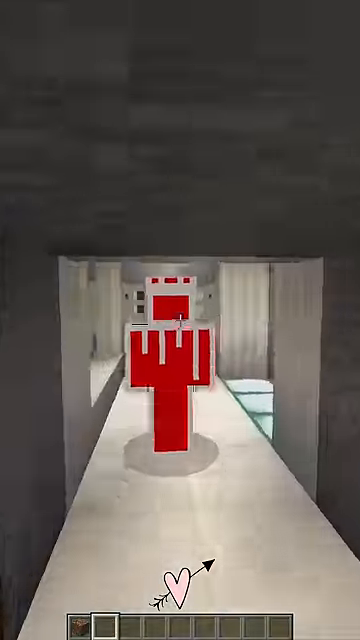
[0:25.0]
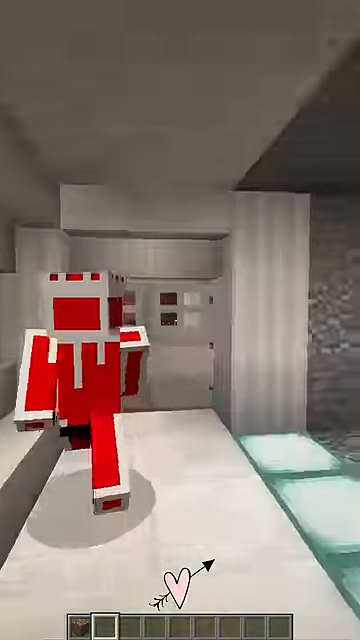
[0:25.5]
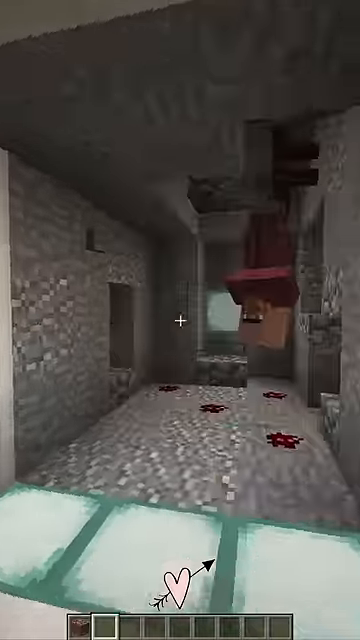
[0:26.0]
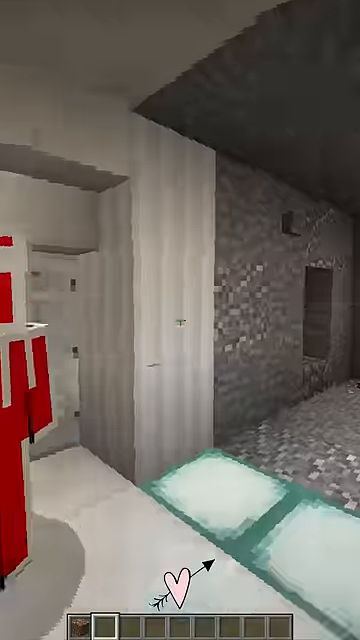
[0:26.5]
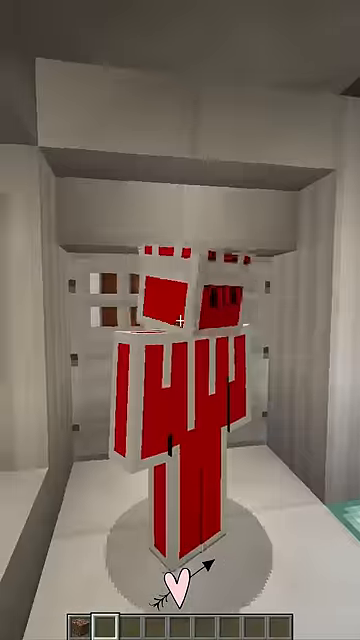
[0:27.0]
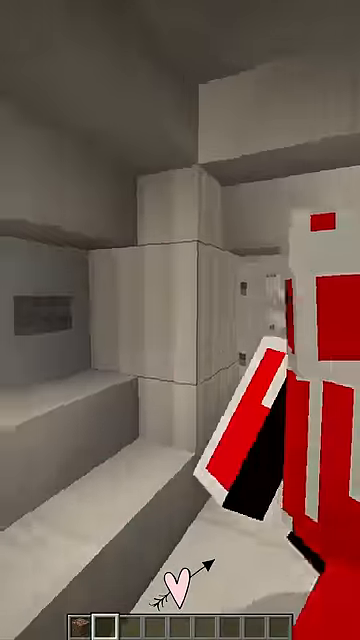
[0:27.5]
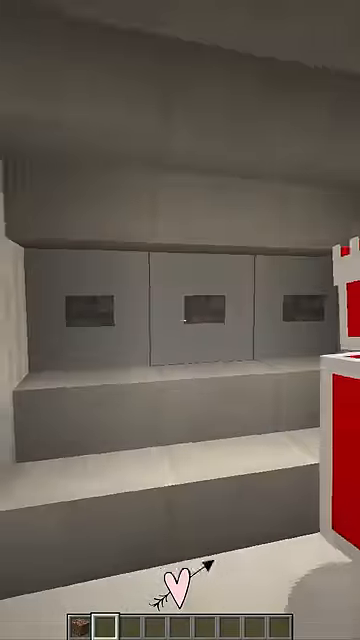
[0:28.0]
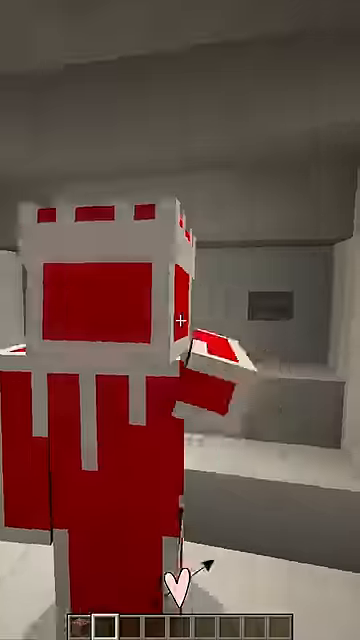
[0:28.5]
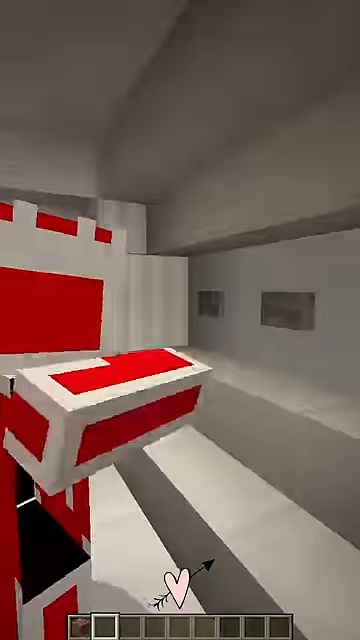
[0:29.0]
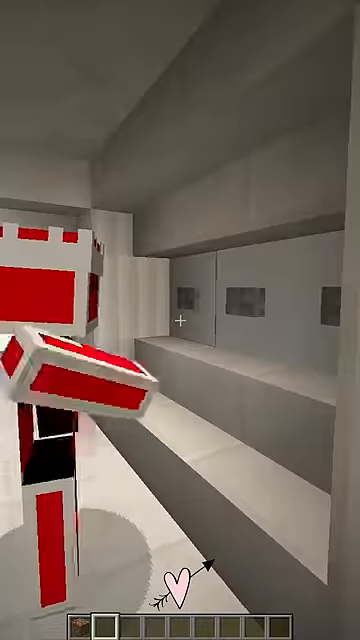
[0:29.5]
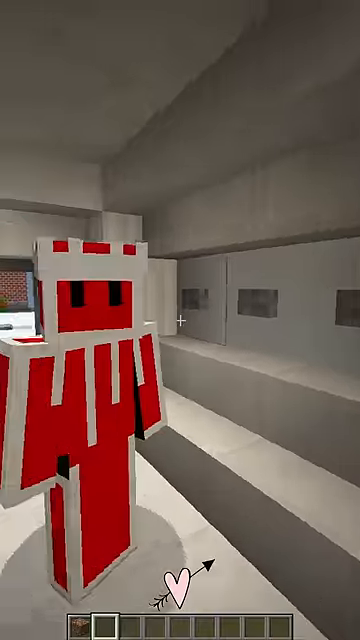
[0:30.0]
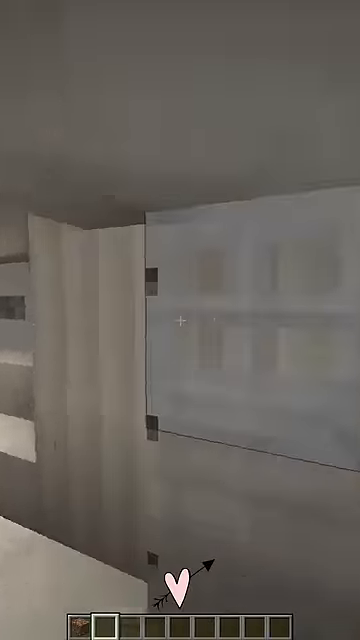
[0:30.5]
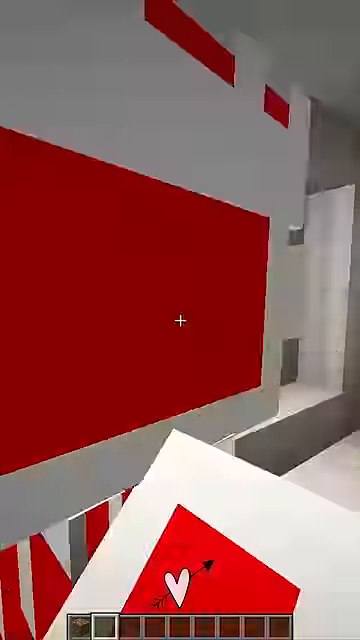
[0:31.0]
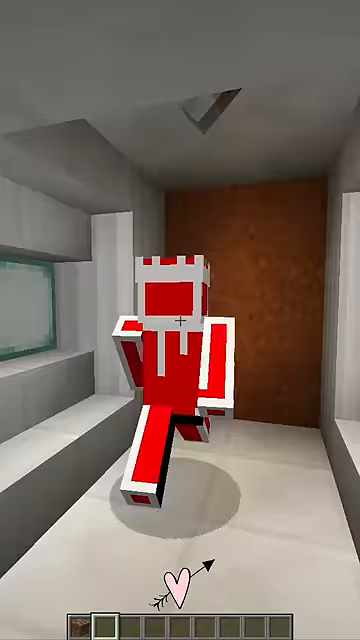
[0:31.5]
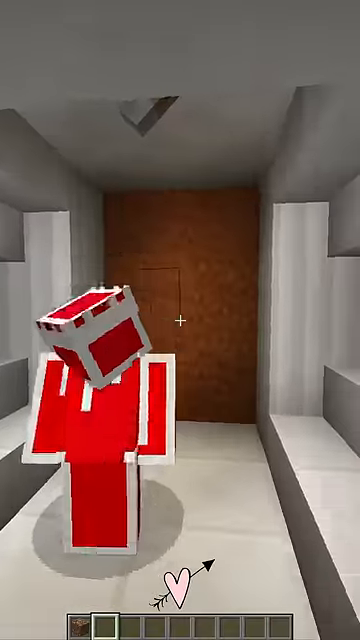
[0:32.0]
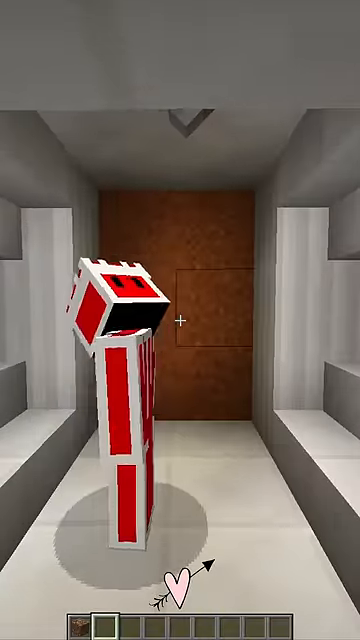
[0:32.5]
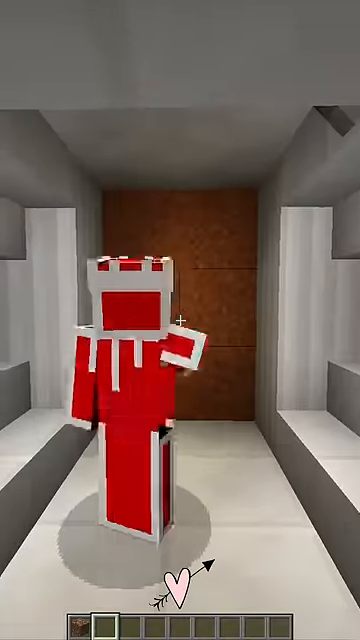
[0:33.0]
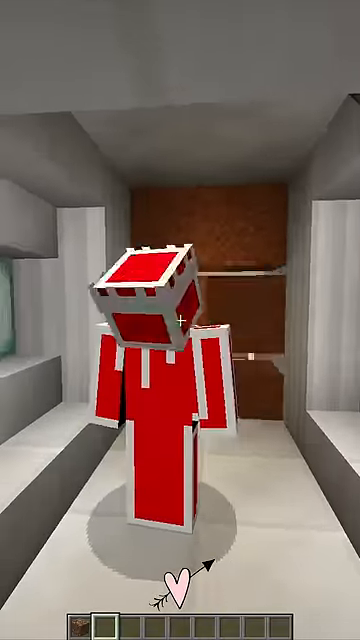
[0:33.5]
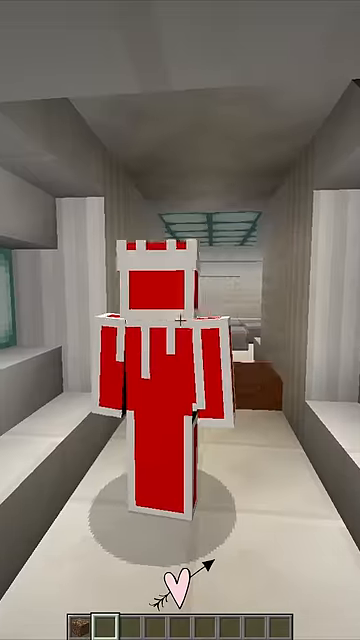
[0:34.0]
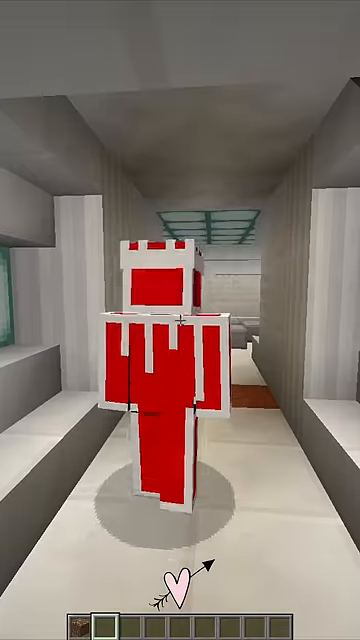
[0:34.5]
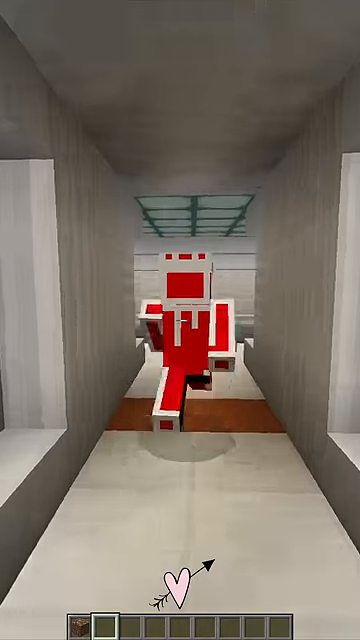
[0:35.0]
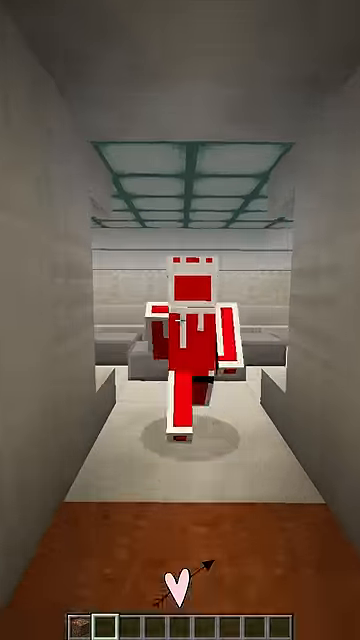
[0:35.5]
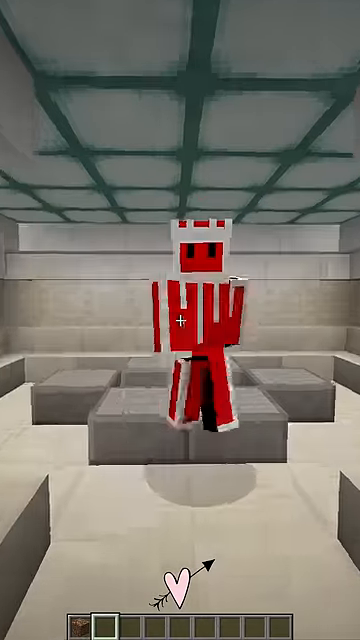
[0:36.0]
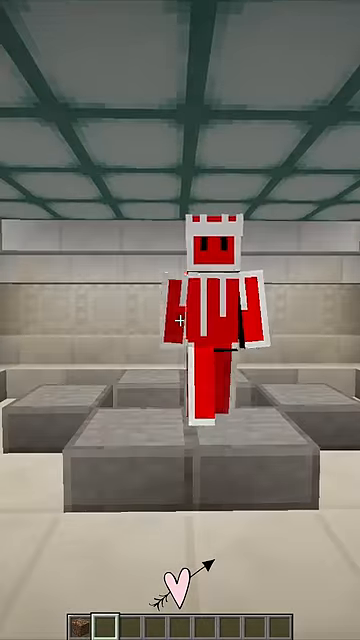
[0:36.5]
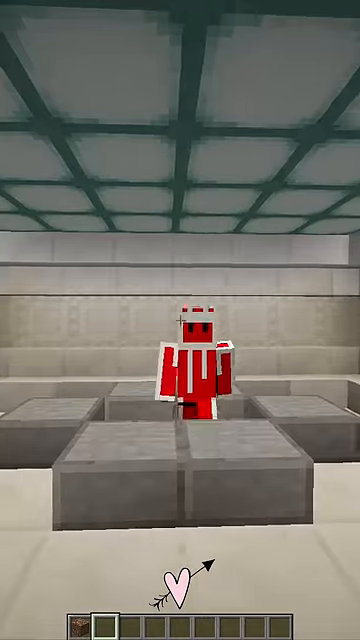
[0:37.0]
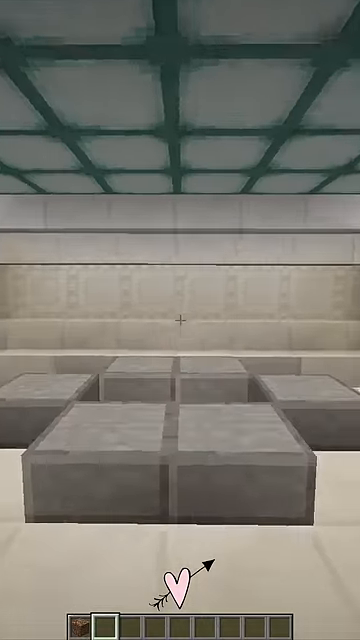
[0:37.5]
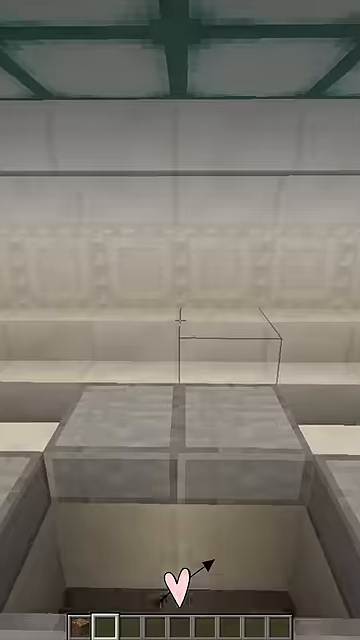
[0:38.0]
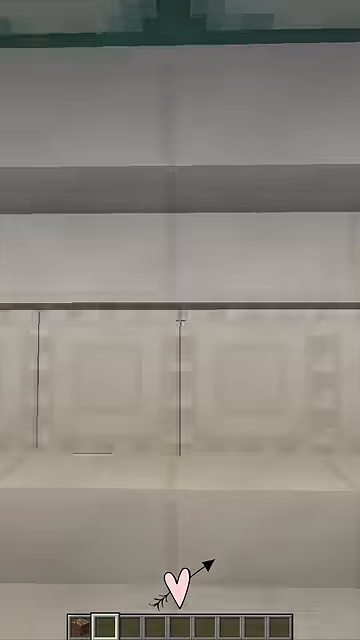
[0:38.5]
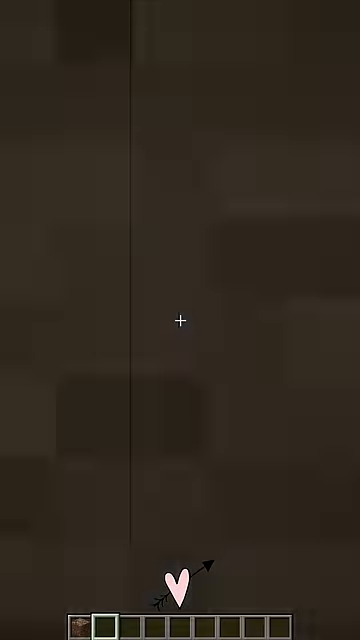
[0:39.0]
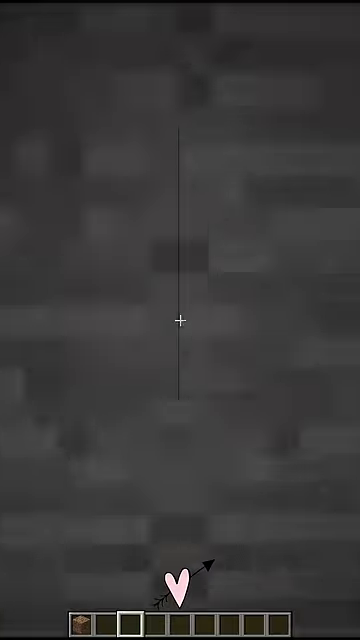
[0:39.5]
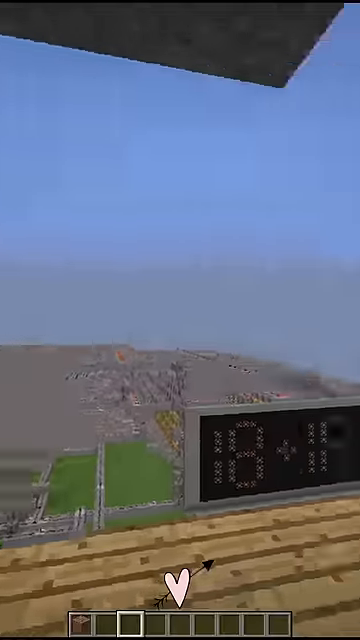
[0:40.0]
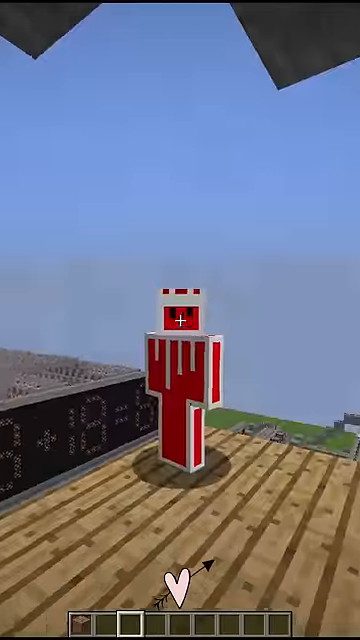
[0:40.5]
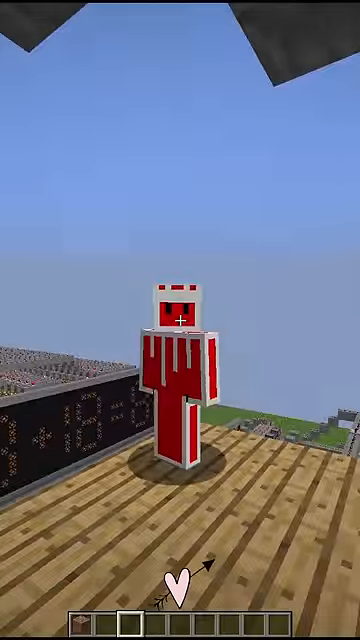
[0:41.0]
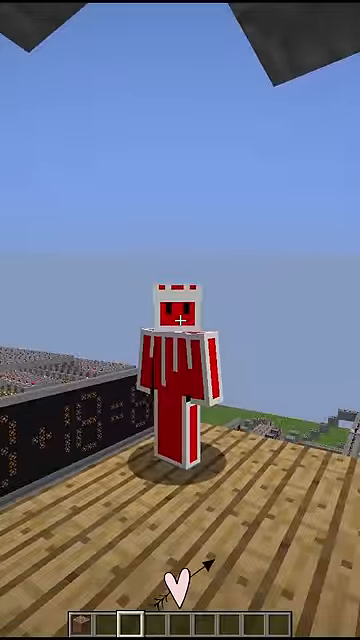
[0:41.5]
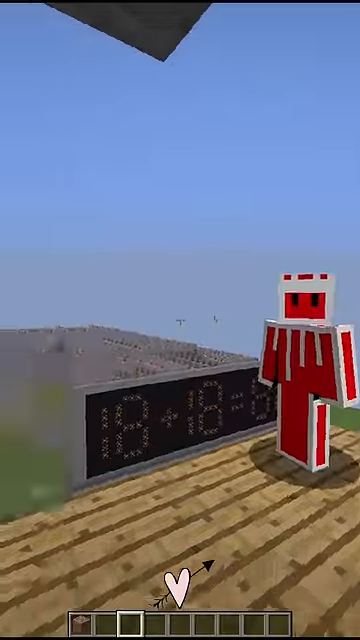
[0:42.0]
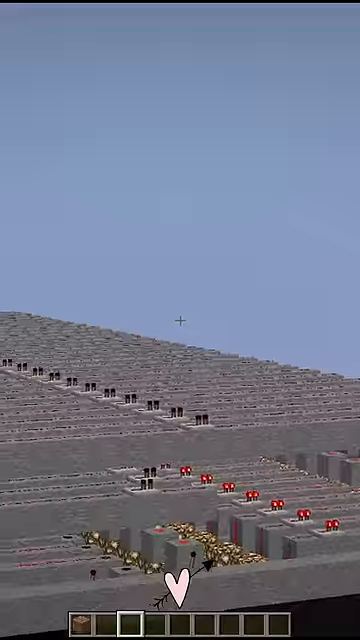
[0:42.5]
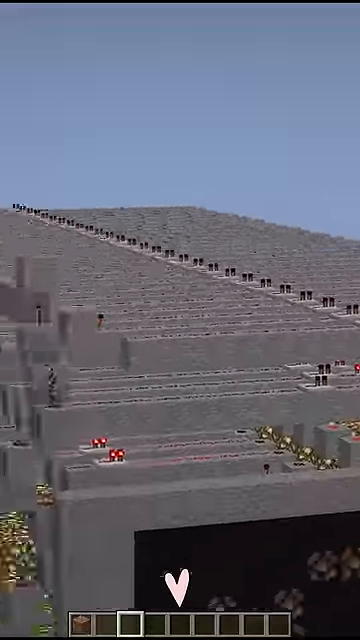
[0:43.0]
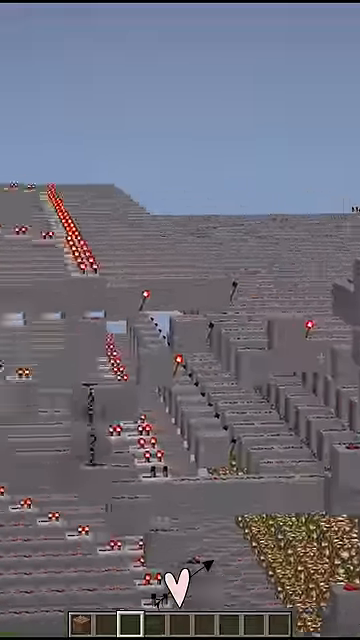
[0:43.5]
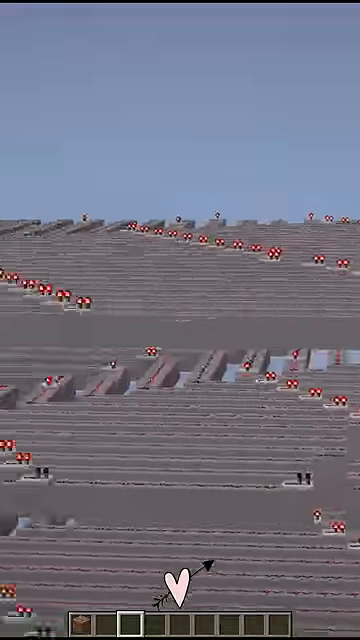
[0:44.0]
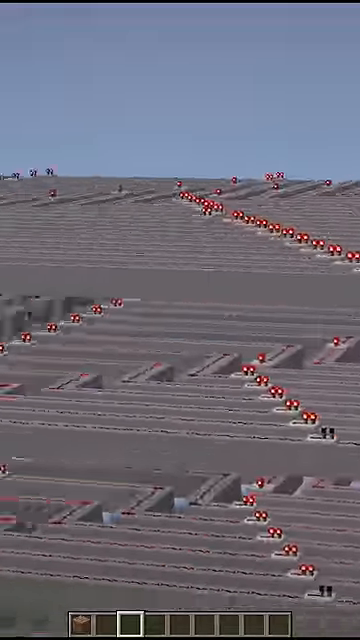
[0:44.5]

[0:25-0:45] The two characters stand at the entrance of the large gray structure, which looks like pyramids or some sort of bunker, with the red stick figure in front of the first-person character. They walk into the beginning of the structure, which looks like a large hallway, with different directions to walk in to the left and right. The red stick figure turns to the left, and the first-person view turns left as well. As the red character stands in front of the door, the view turns to the right side, showing different doors and hallways and, in the far back on the right, a window and a staircase leading to what might be a second floor. The view turns back to follow the stick figure, who has pressed some buttons and opened a door leading into a second hallway, where another door opens. The stick figure walks forward and jumps through a hole in the floor, and the first-person view follows. They land on a platform that appears to be outdoors again, with grass blocks on either side, what looks like a cityscape out in front of them, and blue sky with a skylight.